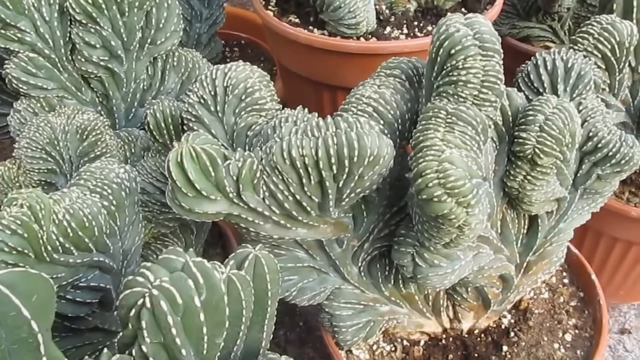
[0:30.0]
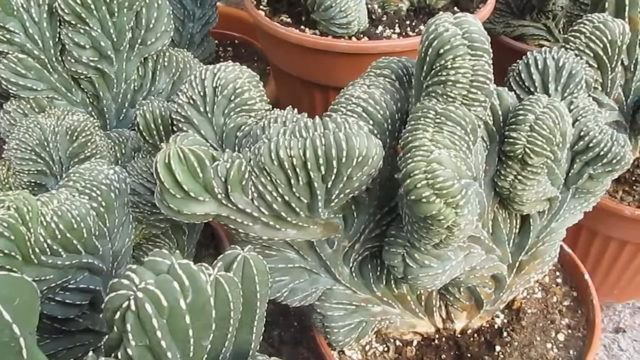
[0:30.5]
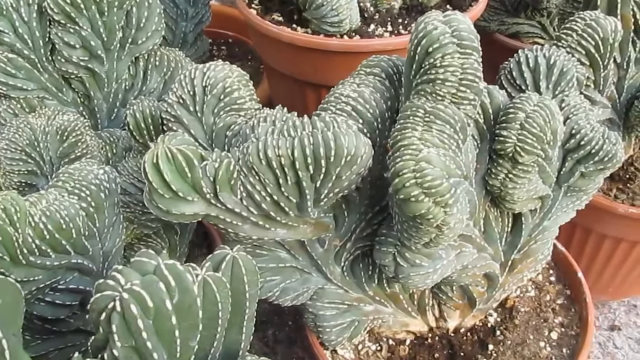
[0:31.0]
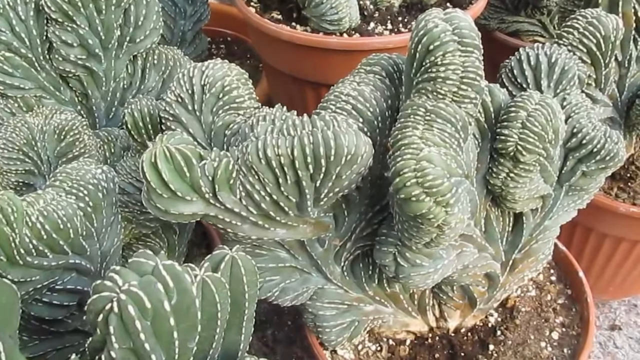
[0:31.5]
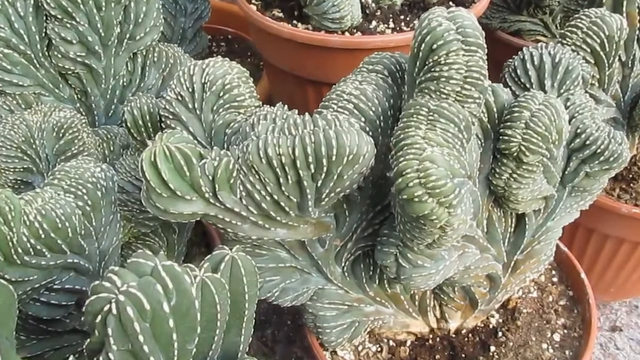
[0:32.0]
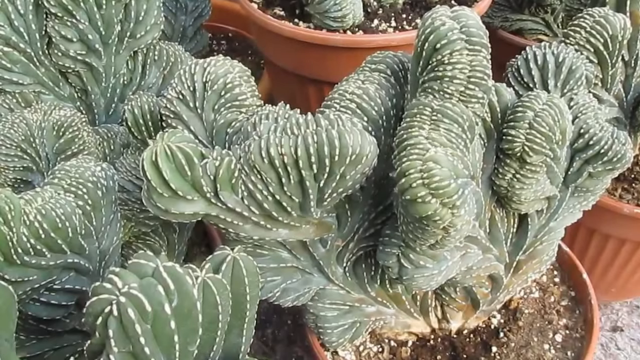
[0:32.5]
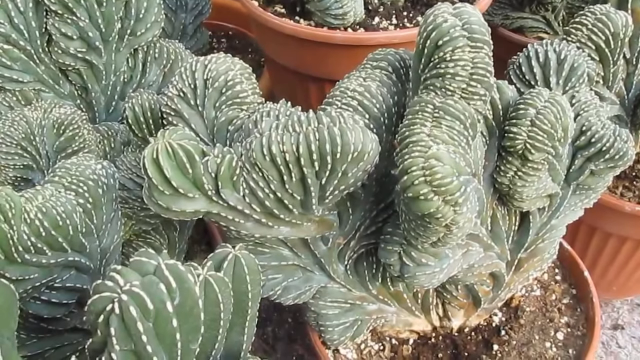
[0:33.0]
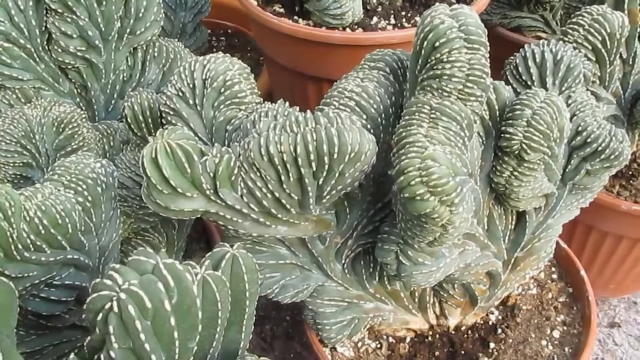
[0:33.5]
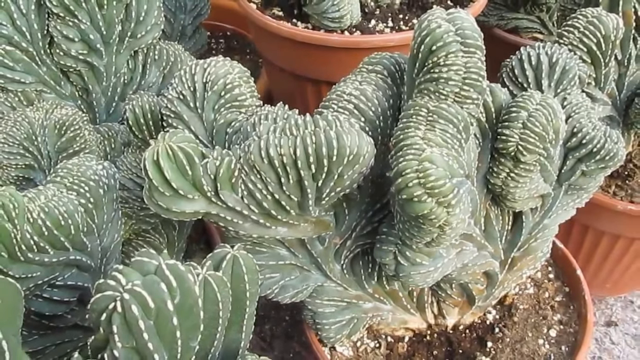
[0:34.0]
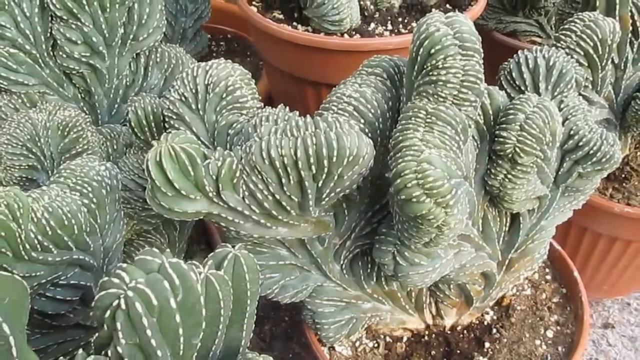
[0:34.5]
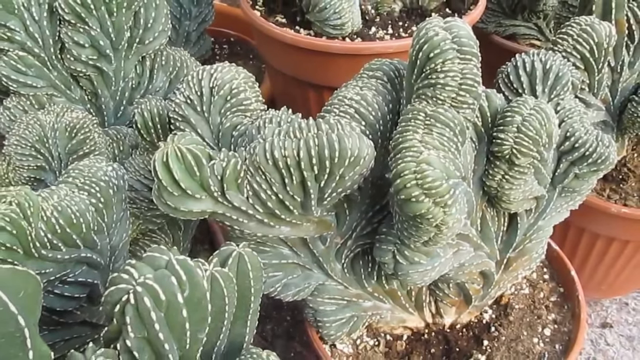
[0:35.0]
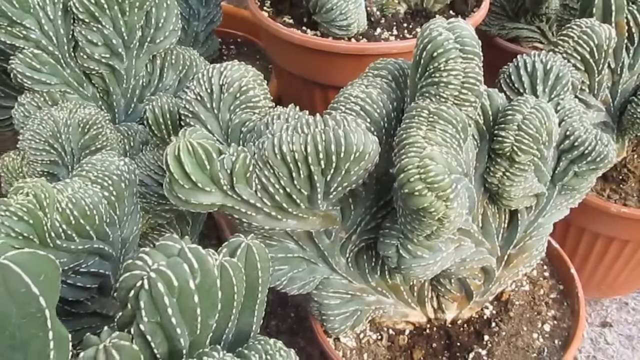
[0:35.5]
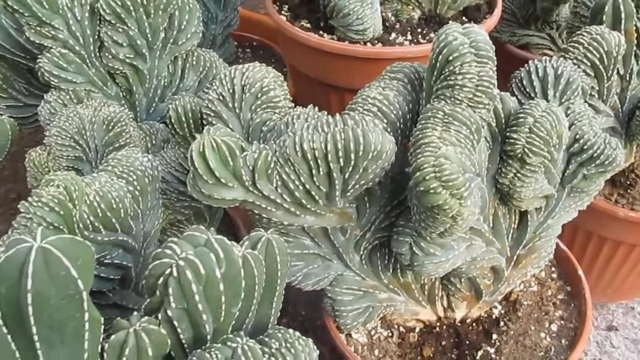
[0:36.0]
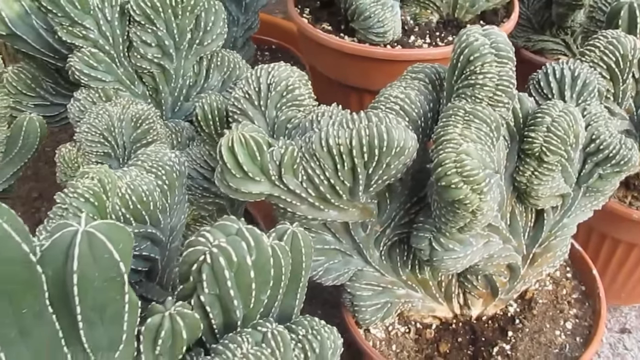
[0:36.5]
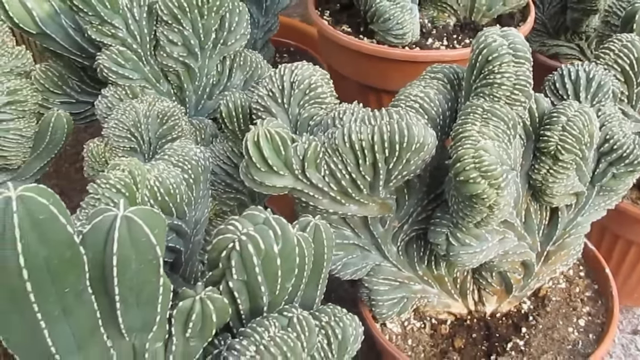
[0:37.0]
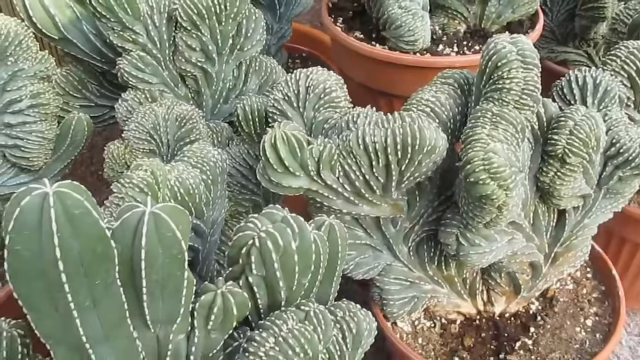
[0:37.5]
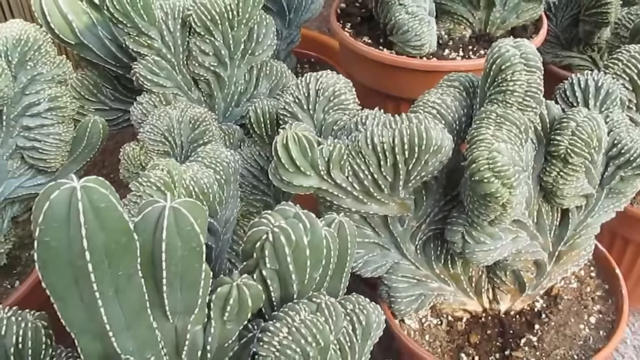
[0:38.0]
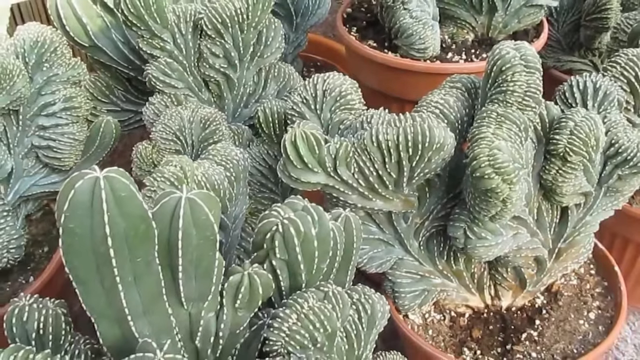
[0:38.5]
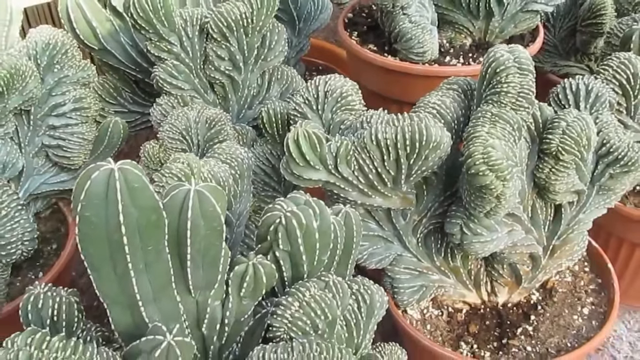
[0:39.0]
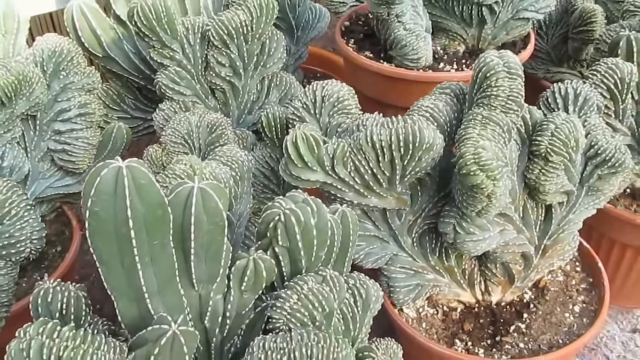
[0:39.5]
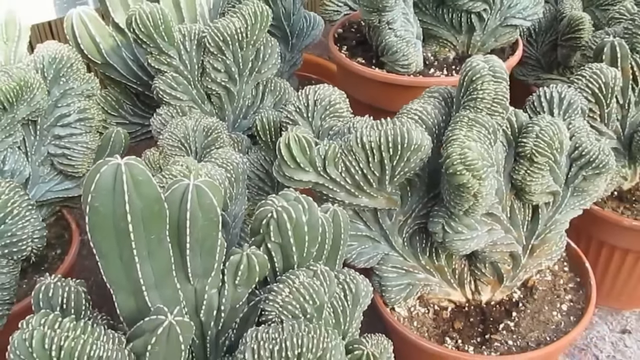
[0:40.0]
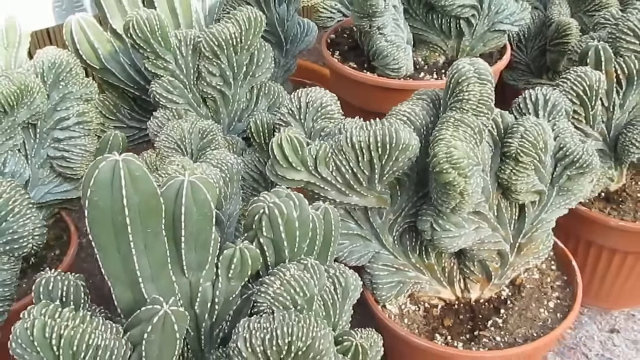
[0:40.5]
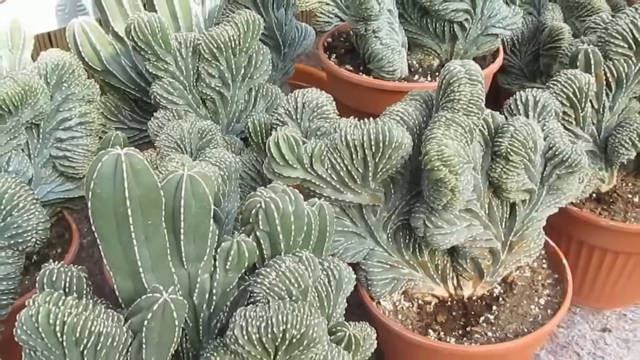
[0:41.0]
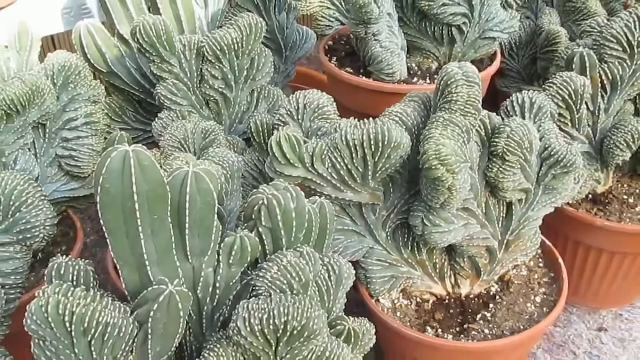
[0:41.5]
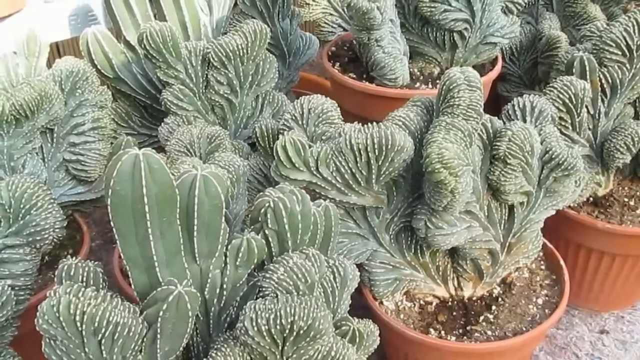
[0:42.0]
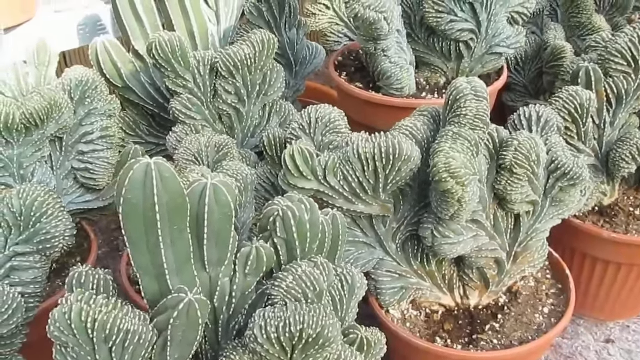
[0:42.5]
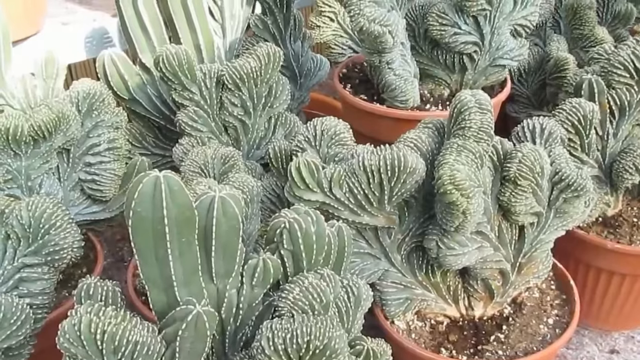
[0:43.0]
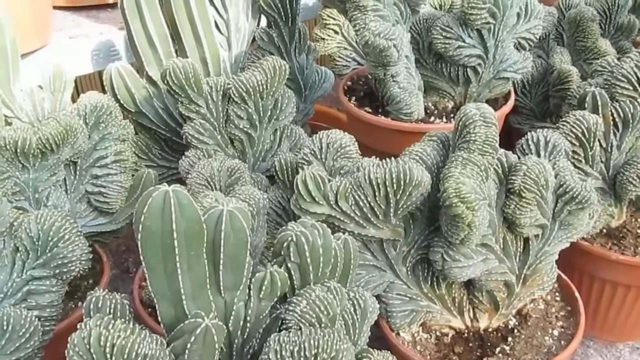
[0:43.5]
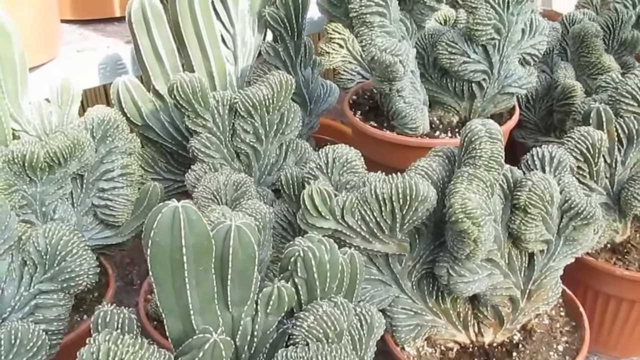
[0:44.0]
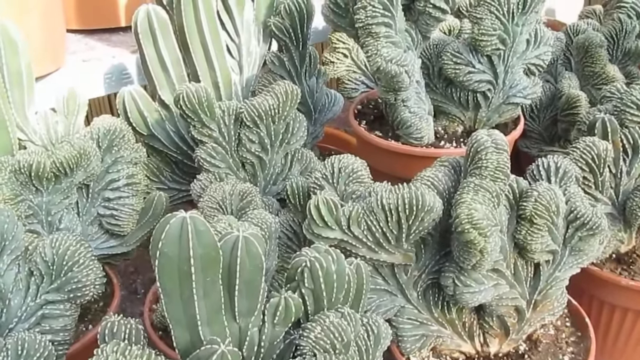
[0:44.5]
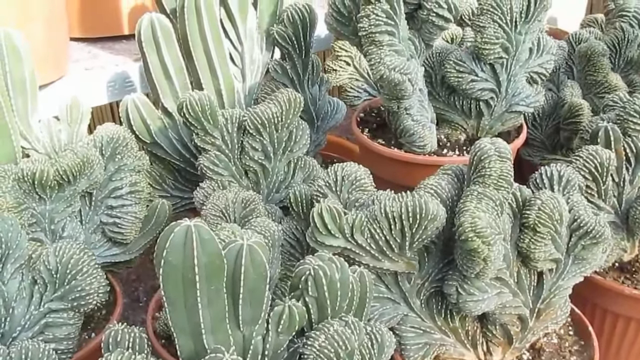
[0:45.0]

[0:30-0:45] The person focuses on another cactus, whose texture looks like ribbon chips from a fair or ribbon candy from a candy store. Based on the light, it looks to be a partly cloudy day. The details of the cactuses are clearly visible. The plants almost look freshly watered, as some have a wetter patch of soil toward their center, while the pots are not drenched and are still very dry on the outer parts. The cactuses vary in size and are in pots outdoors. There seems to be another tier behind these cactuses with more pots of plants on it.